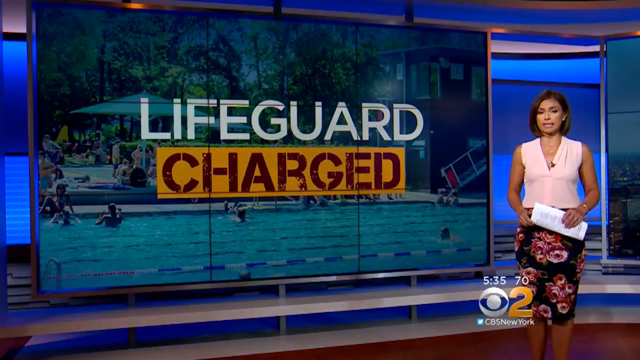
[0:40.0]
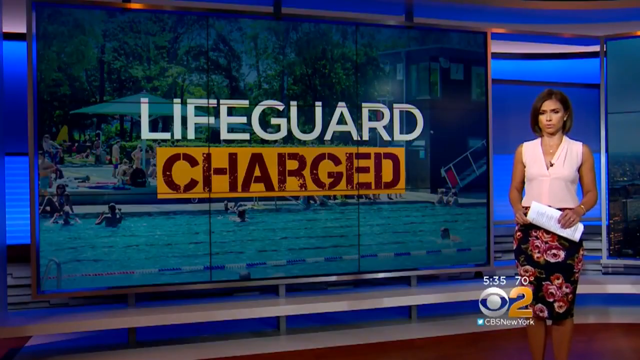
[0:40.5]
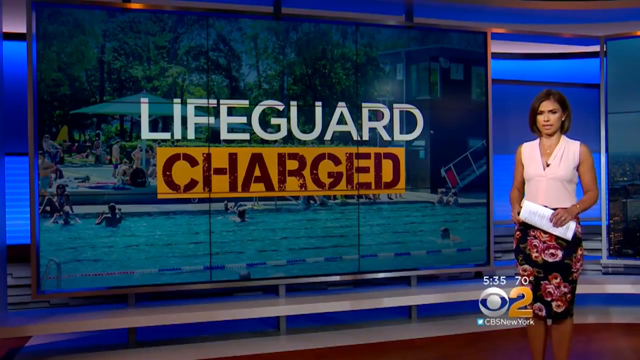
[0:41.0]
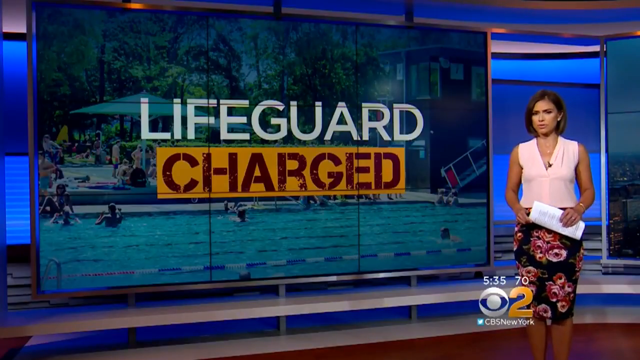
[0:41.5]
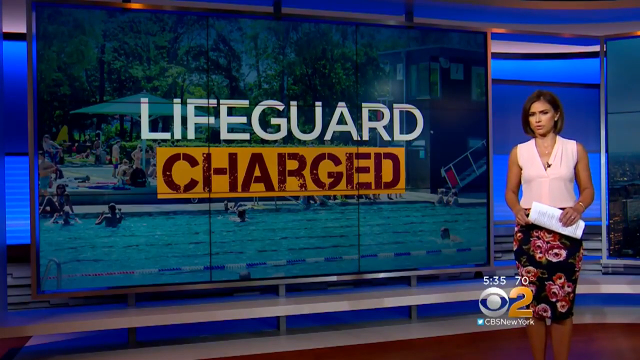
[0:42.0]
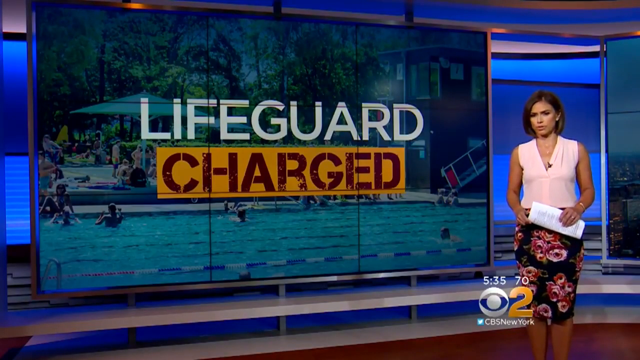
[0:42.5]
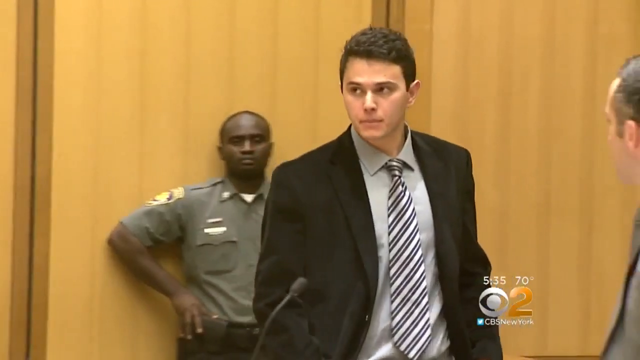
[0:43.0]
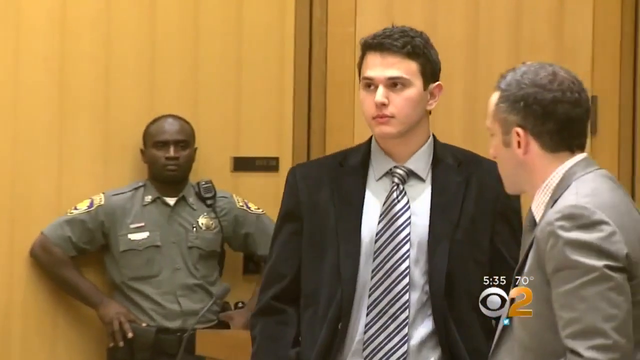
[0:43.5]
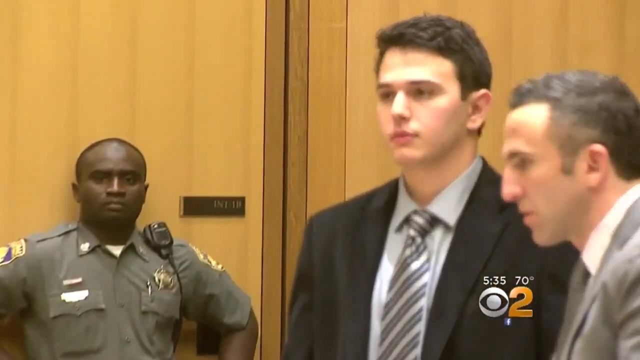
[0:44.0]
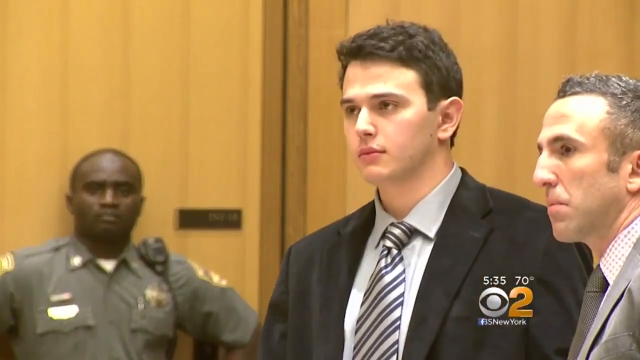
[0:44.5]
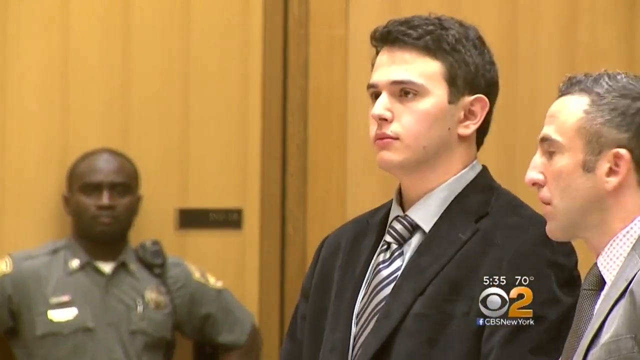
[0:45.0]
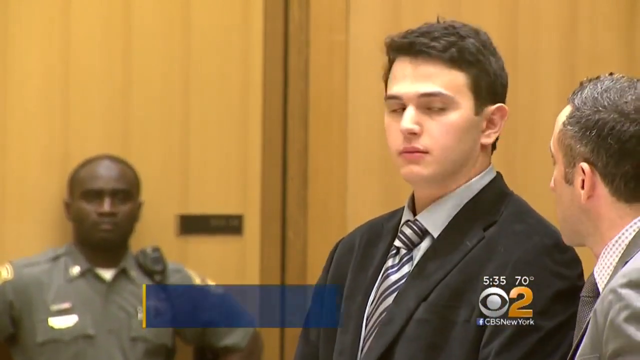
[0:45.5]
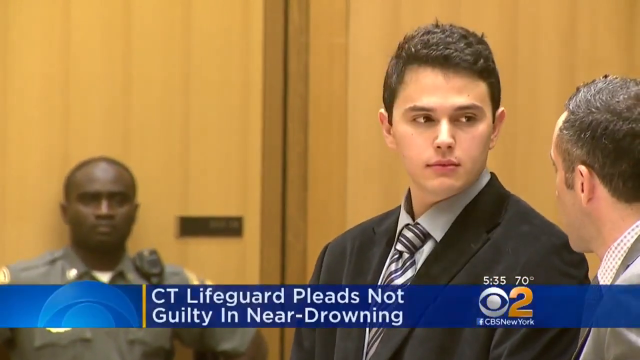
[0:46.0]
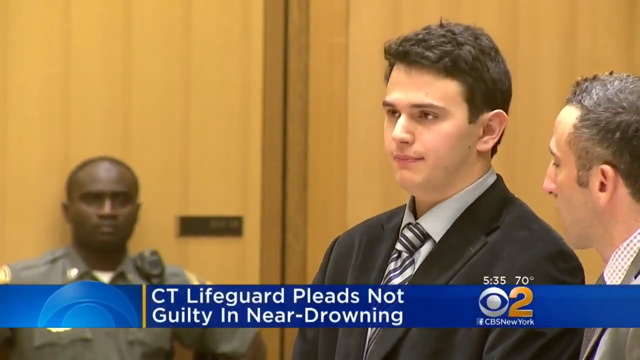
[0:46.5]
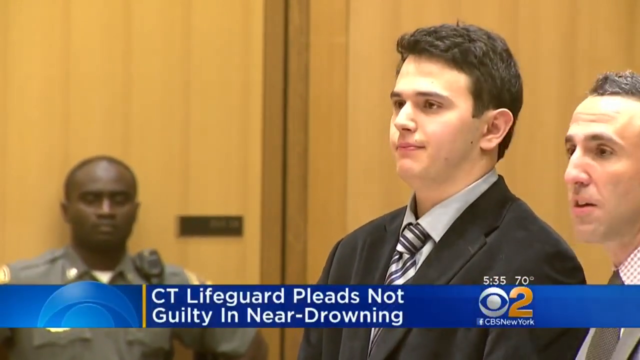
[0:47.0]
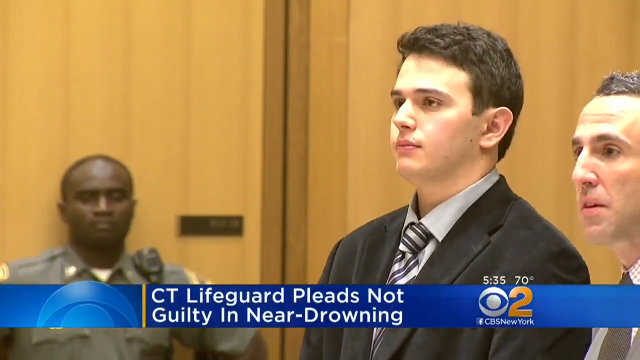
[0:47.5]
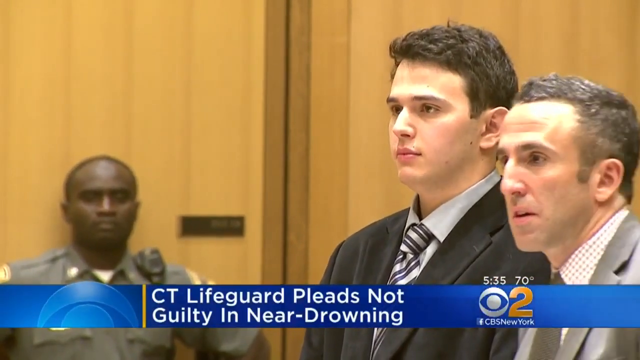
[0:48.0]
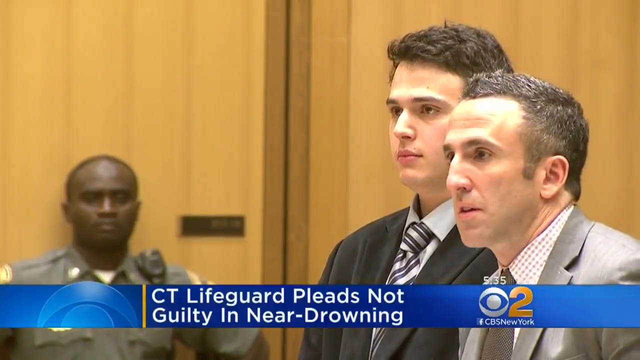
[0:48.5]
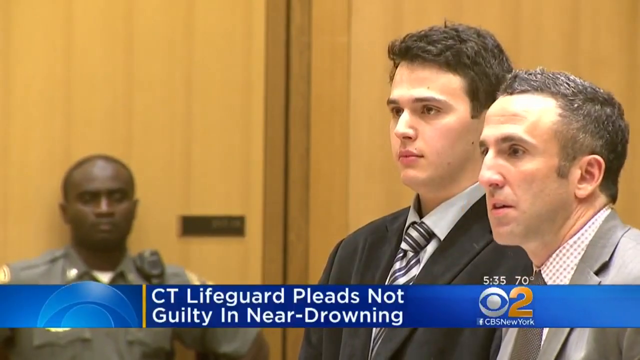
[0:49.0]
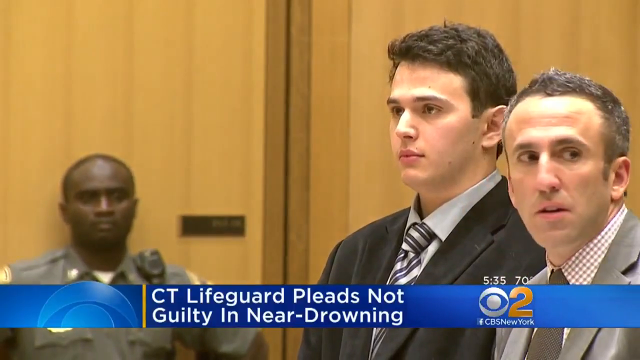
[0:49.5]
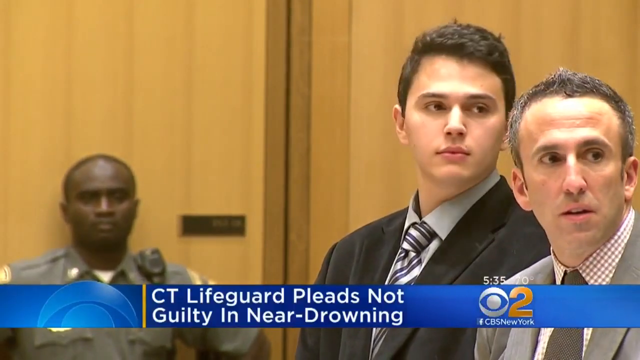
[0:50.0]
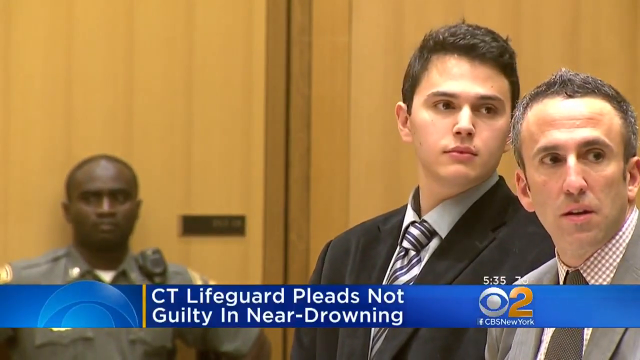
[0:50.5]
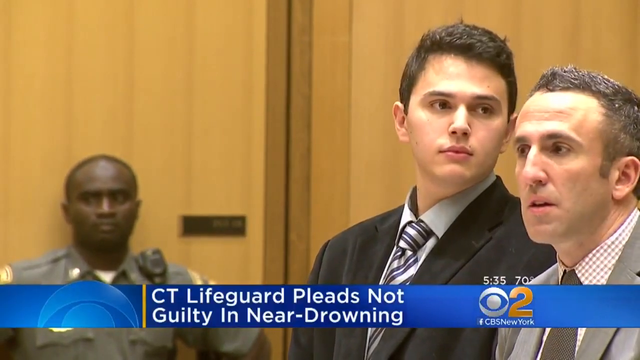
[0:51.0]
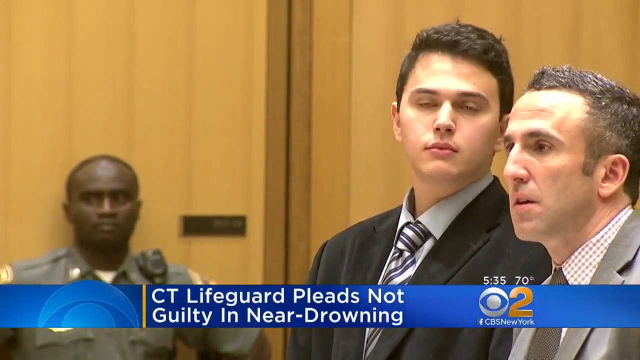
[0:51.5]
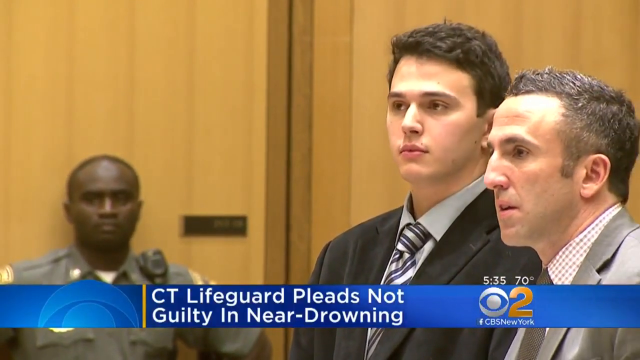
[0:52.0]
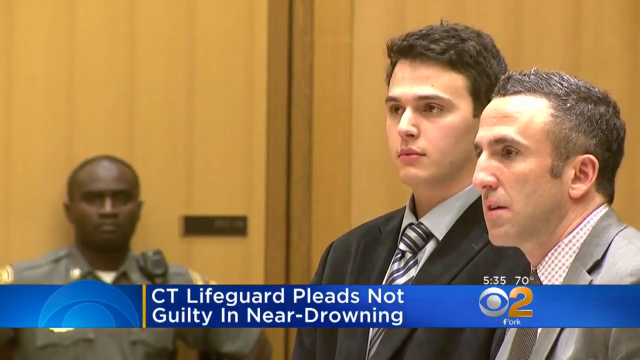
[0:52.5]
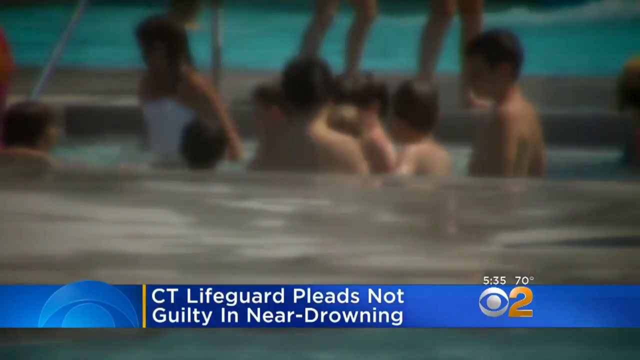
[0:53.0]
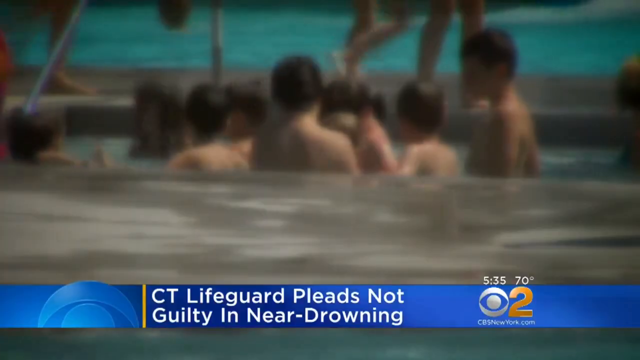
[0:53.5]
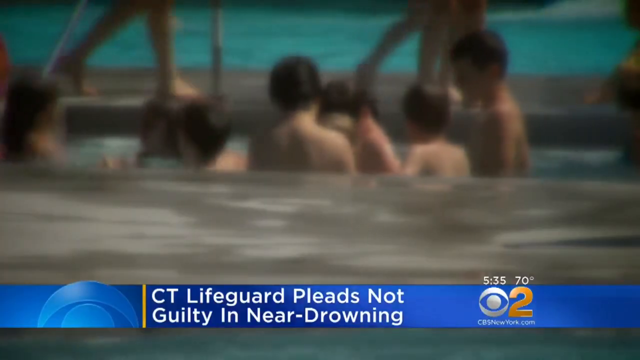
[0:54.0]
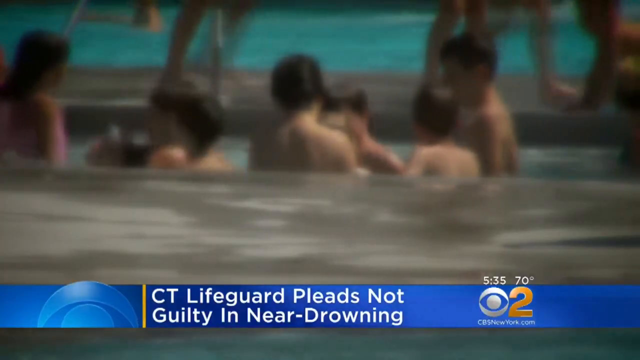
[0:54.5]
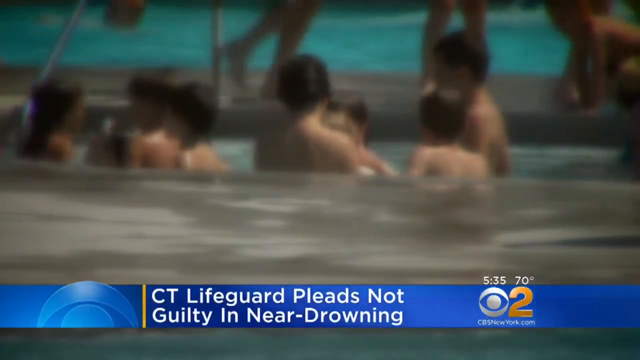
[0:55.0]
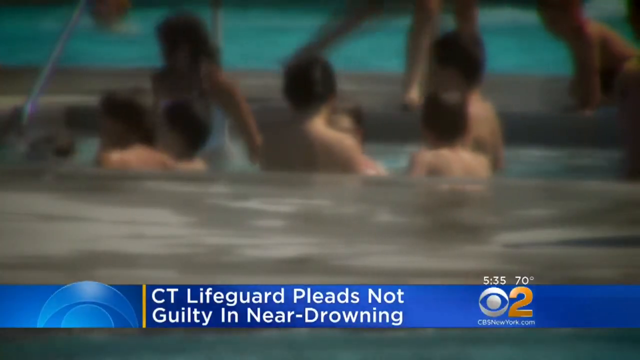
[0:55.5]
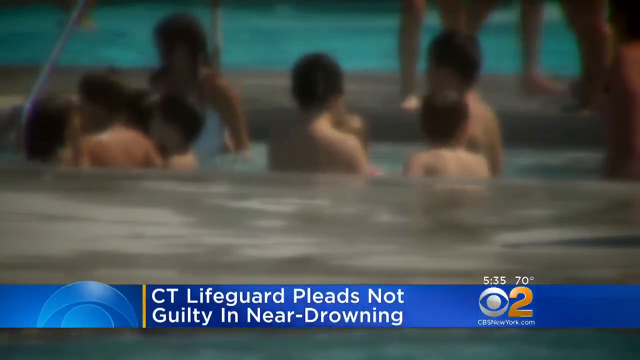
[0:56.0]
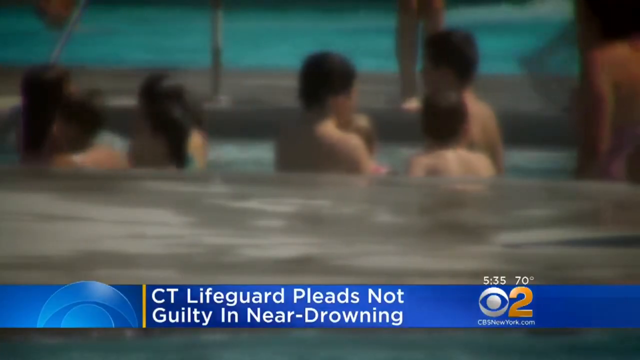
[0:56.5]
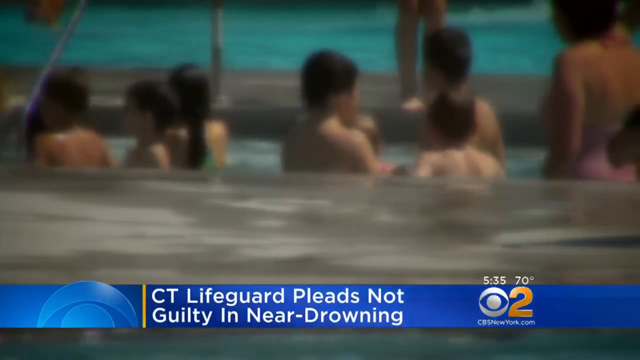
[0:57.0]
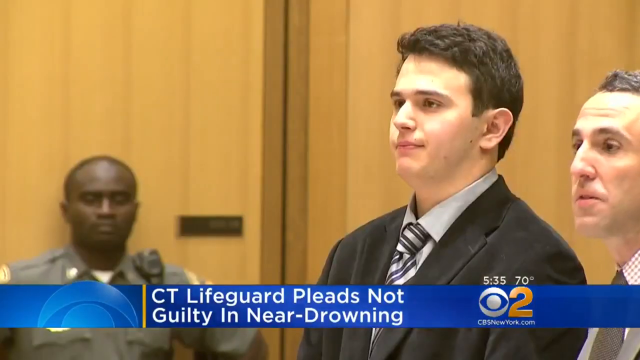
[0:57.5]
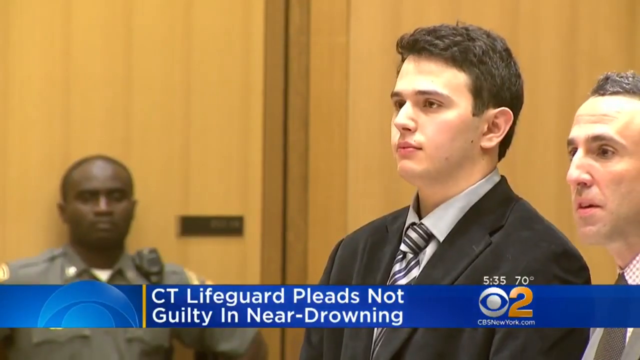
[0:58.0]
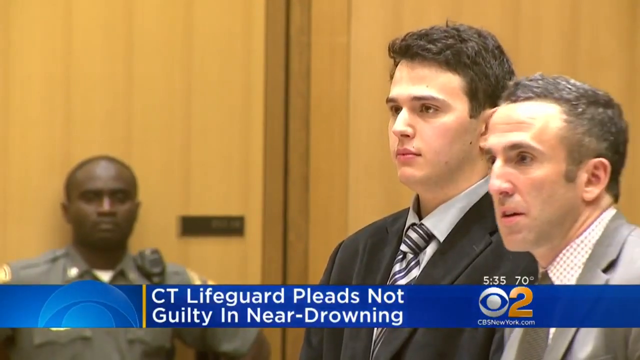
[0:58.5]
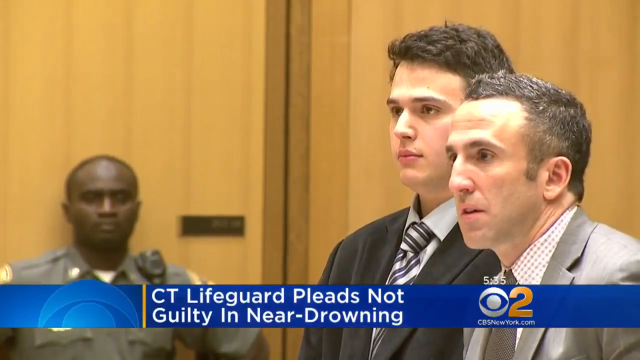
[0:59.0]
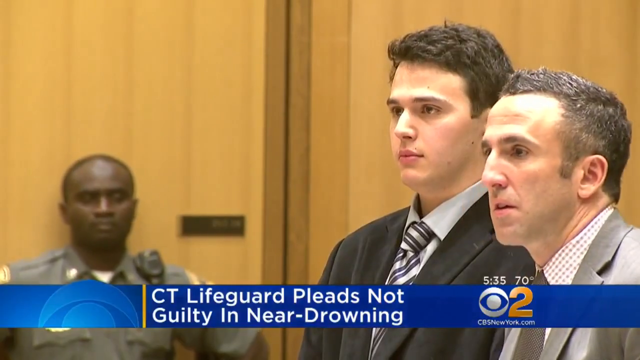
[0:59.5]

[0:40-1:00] The story cuts to clips of the lifeguard in court and shows court documents with text saying the lifeguard in Connecticut pleads not guilty in a child near-drowning case. In court he wears a black suit with a gray shirt and a gray striped tie, and his lawyer wears a gray suit with a plaid shirt and tie. Footage of kids playing in the pool is shown. The story returns to the teleprompter woman, who wears a pink top and a floral black and red skirt, with the image of the kids at the pool on the big screen.